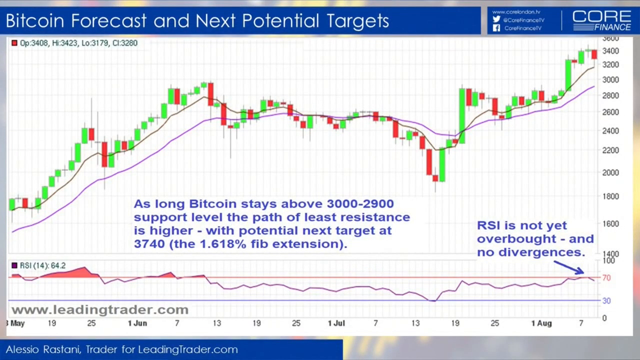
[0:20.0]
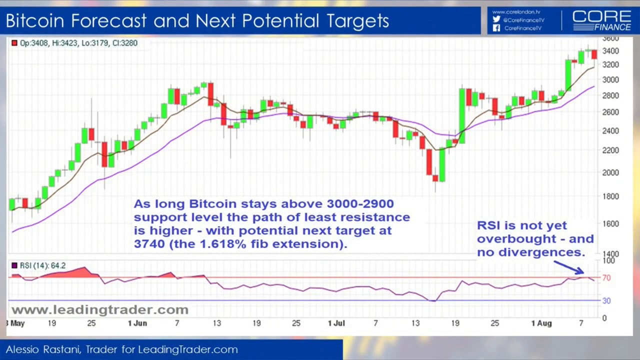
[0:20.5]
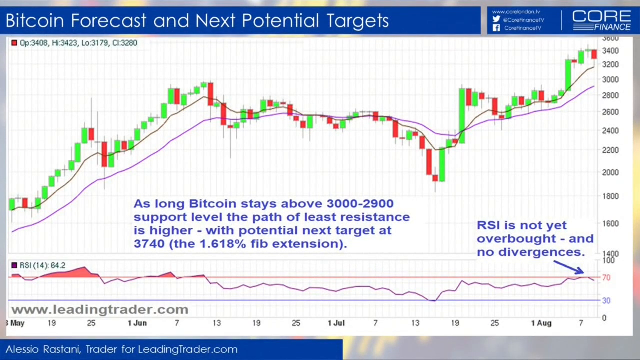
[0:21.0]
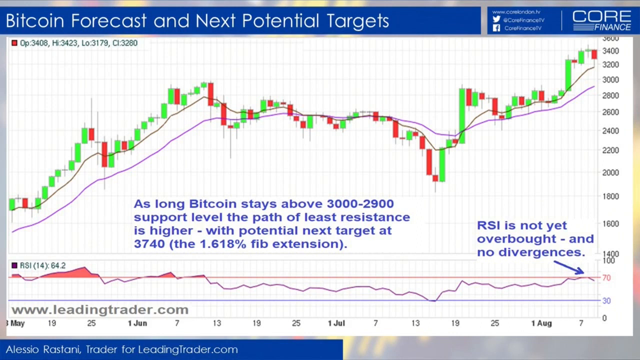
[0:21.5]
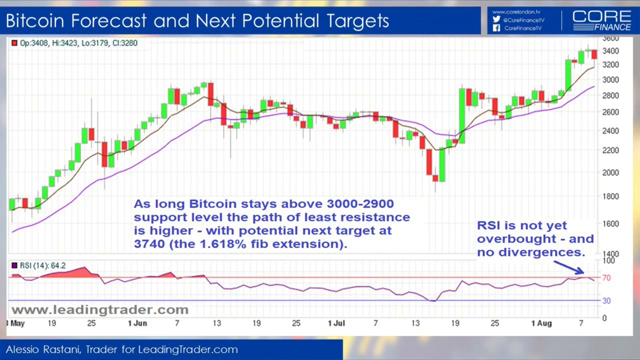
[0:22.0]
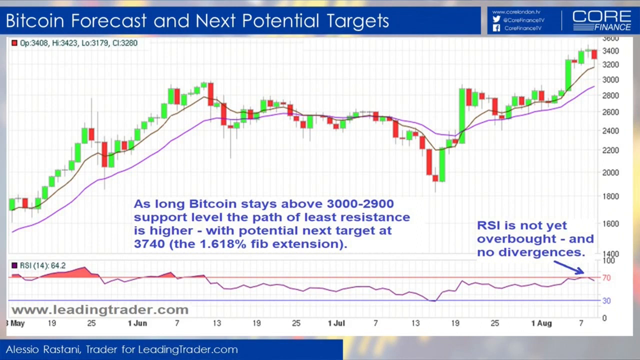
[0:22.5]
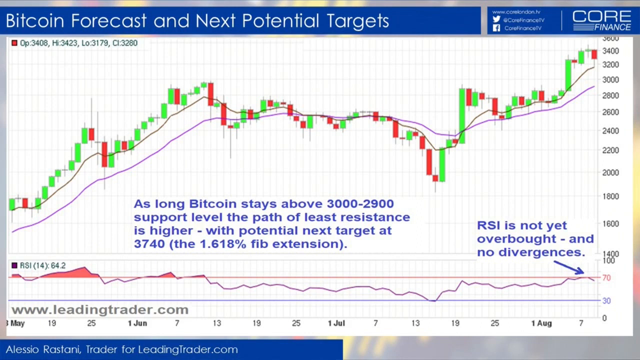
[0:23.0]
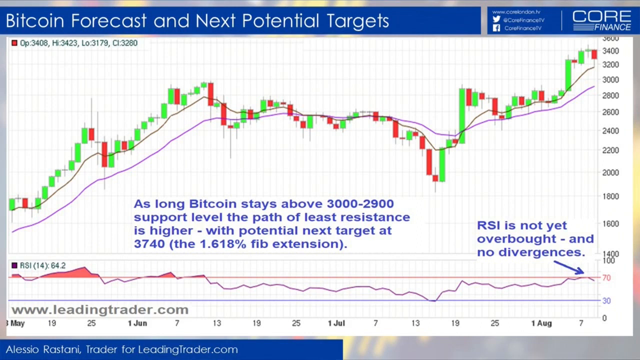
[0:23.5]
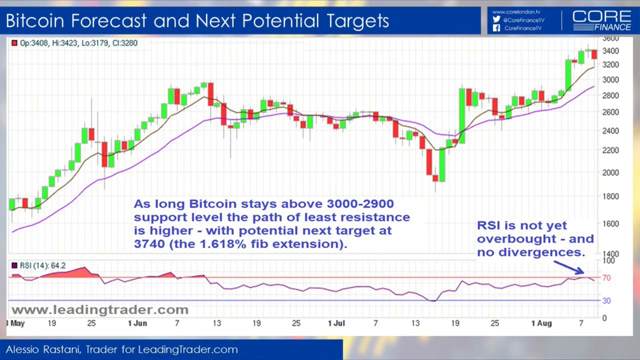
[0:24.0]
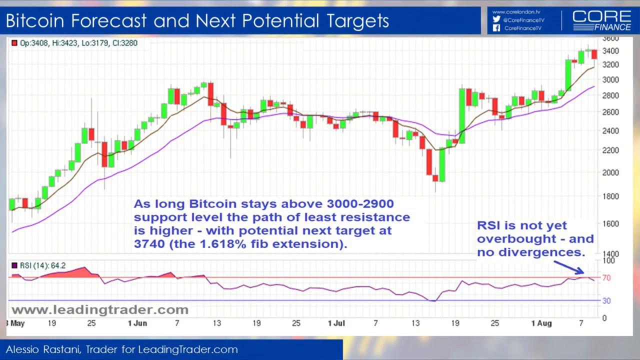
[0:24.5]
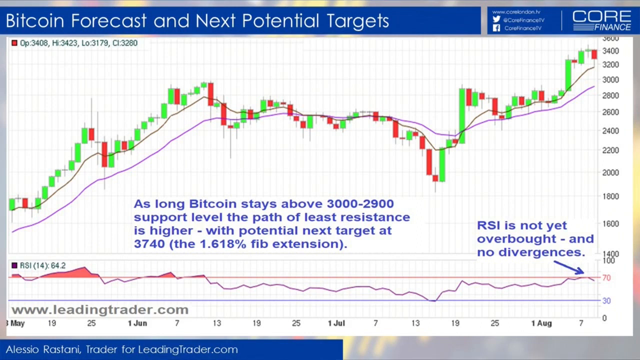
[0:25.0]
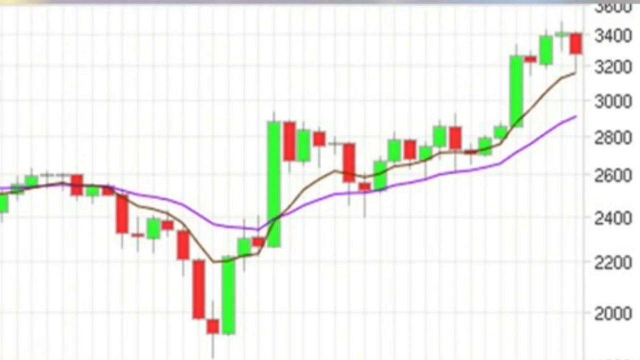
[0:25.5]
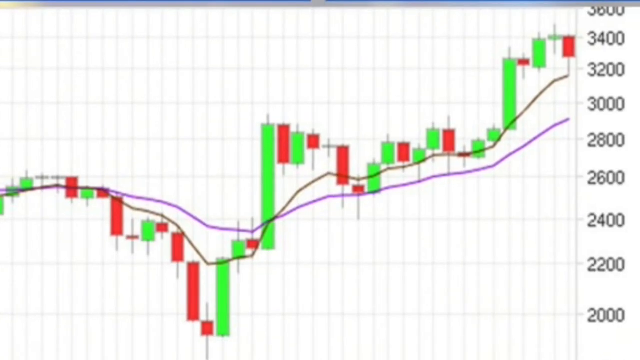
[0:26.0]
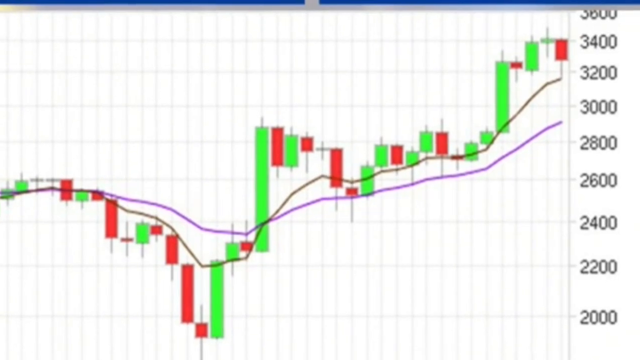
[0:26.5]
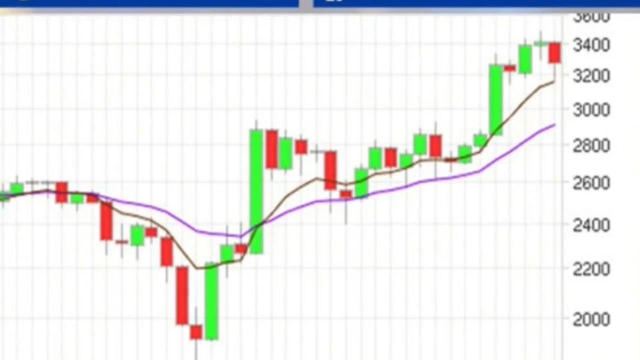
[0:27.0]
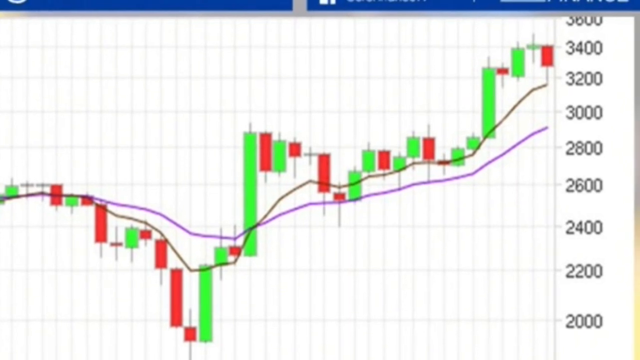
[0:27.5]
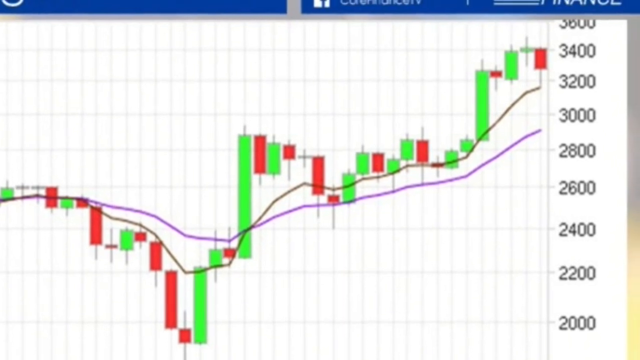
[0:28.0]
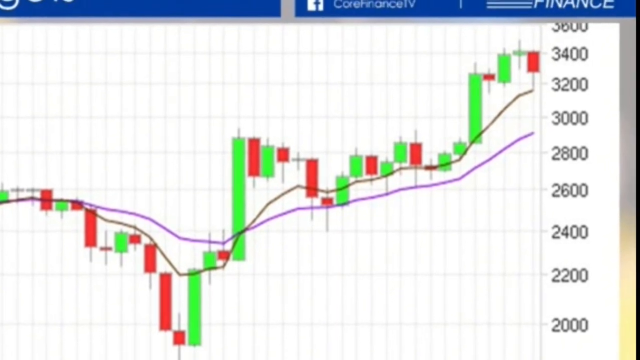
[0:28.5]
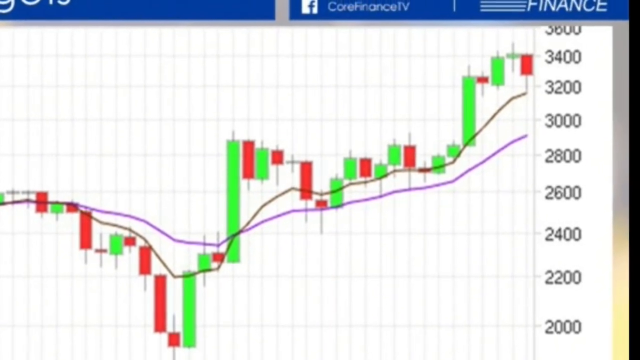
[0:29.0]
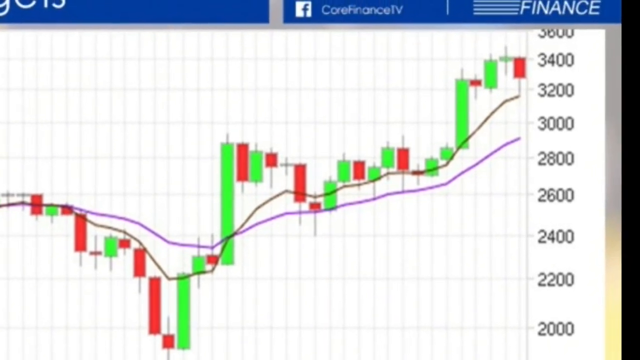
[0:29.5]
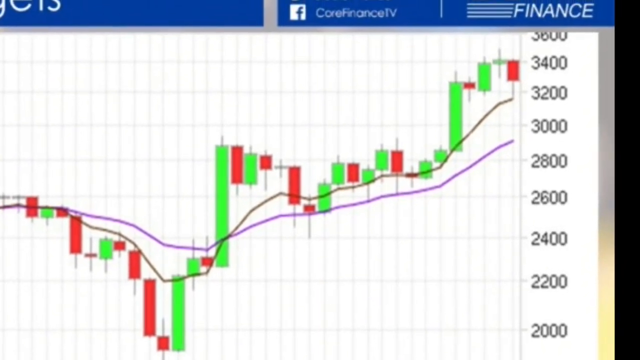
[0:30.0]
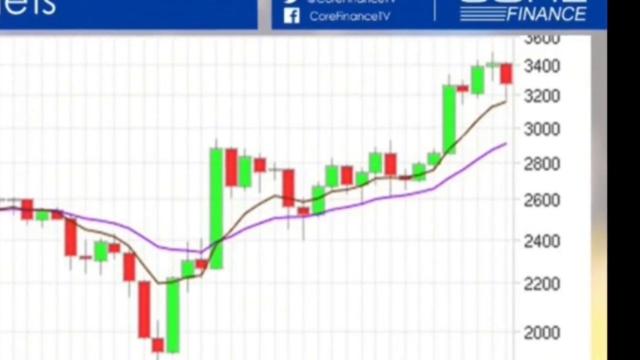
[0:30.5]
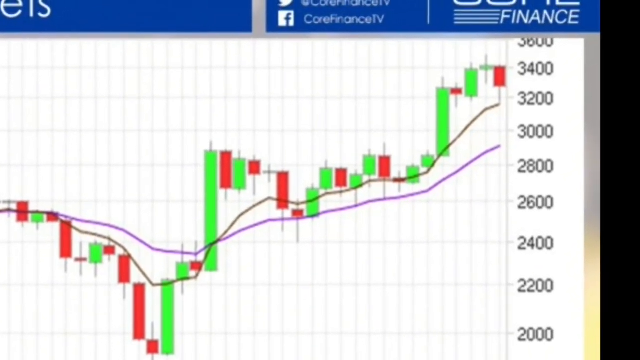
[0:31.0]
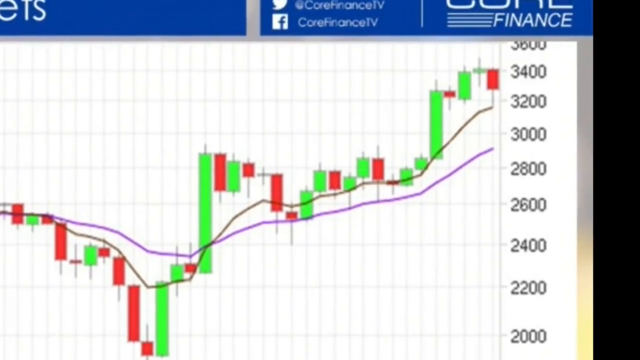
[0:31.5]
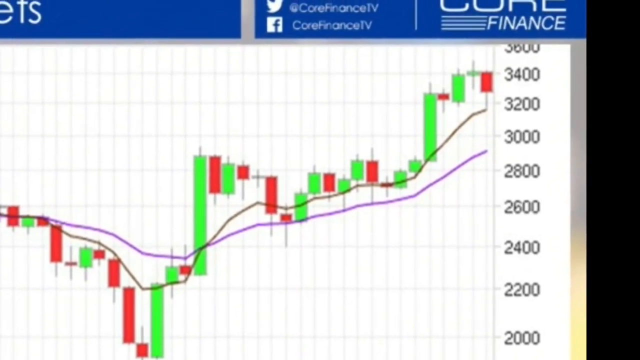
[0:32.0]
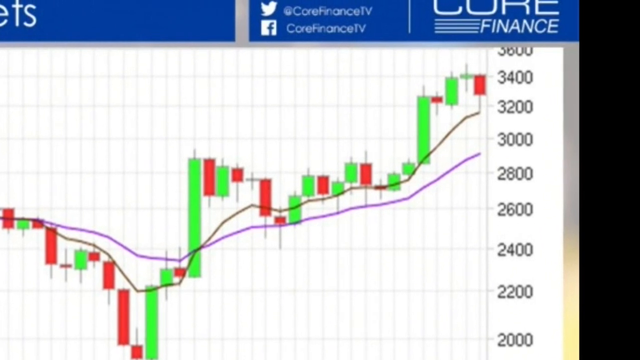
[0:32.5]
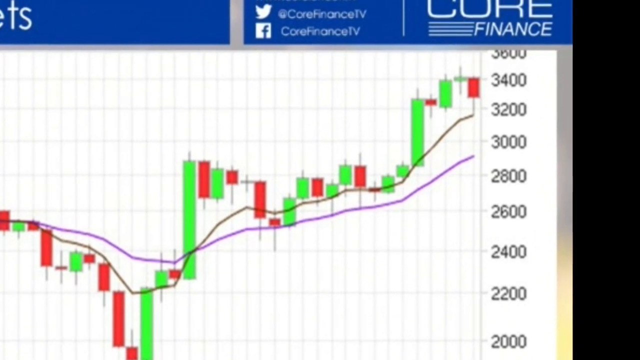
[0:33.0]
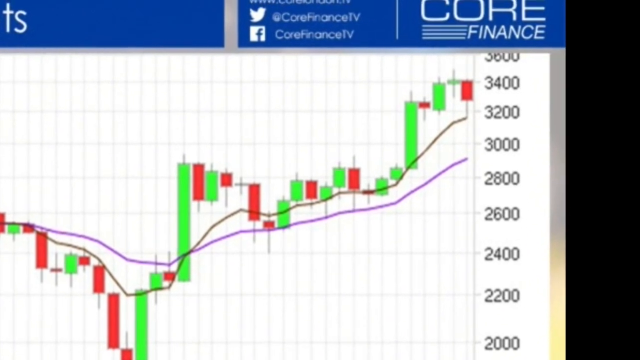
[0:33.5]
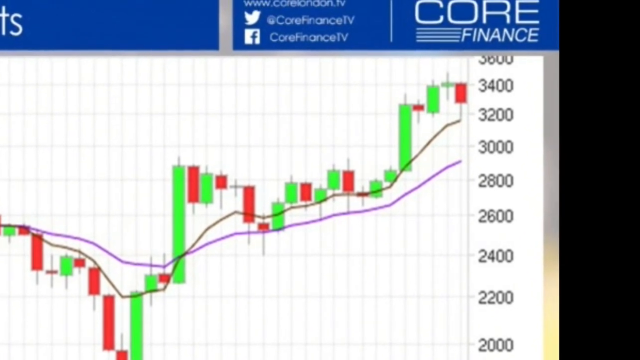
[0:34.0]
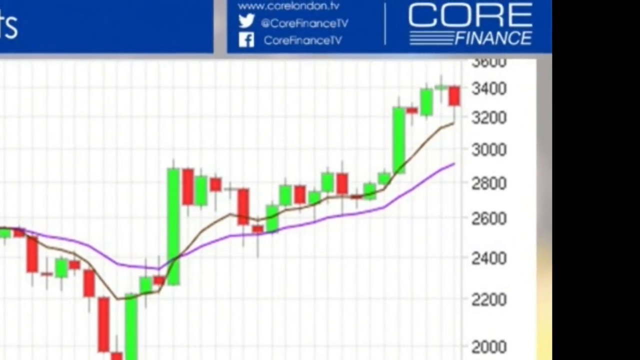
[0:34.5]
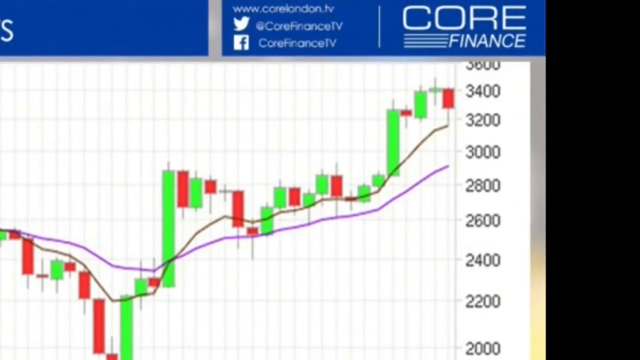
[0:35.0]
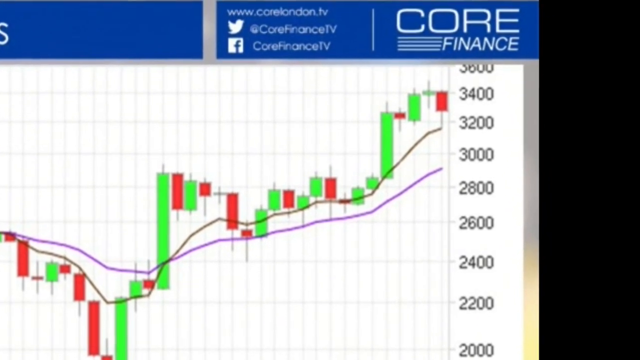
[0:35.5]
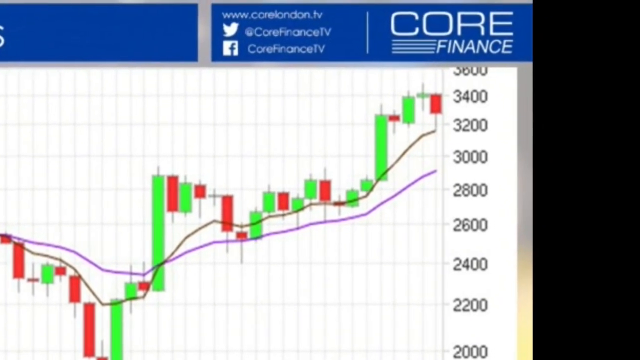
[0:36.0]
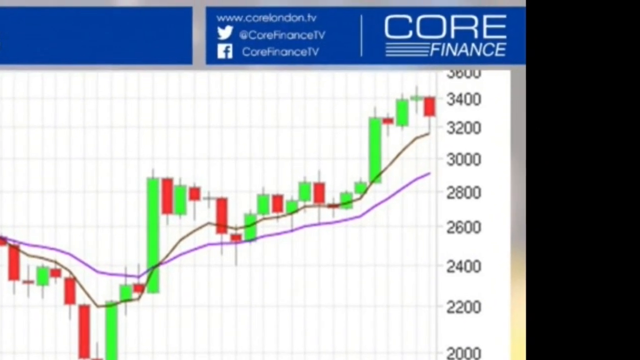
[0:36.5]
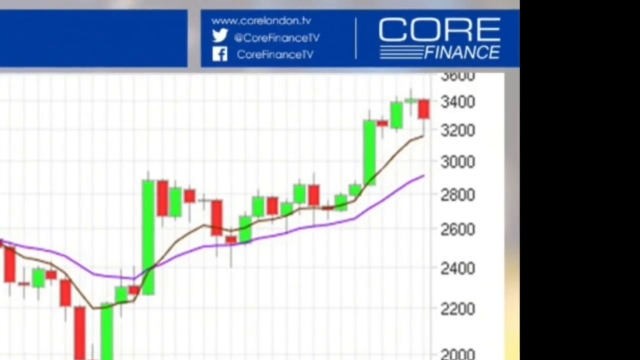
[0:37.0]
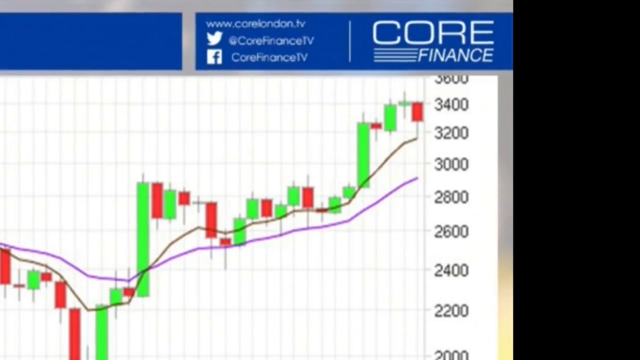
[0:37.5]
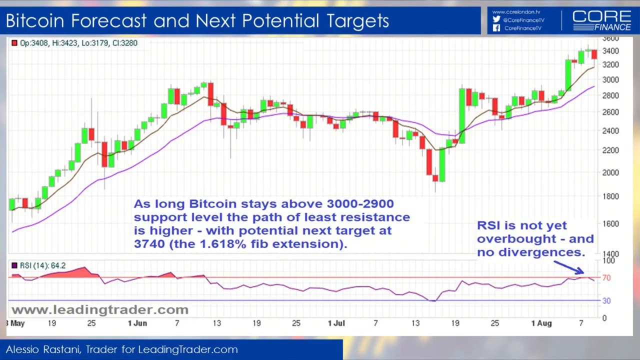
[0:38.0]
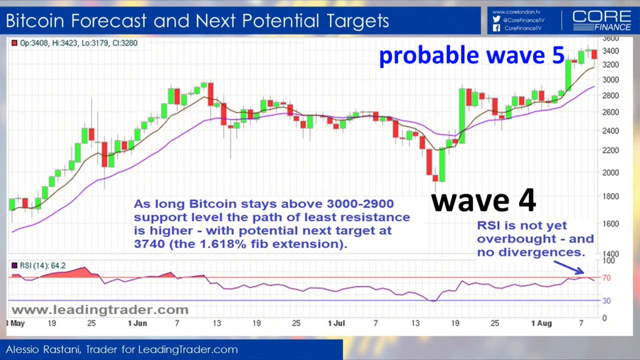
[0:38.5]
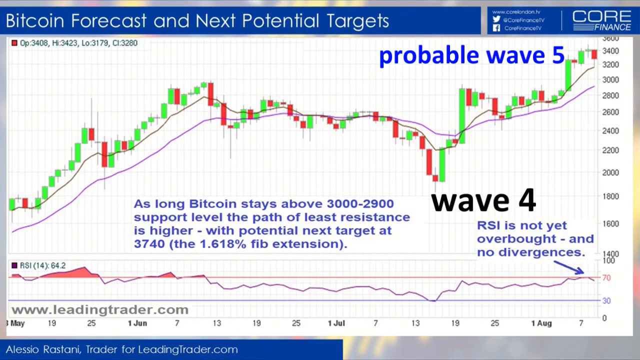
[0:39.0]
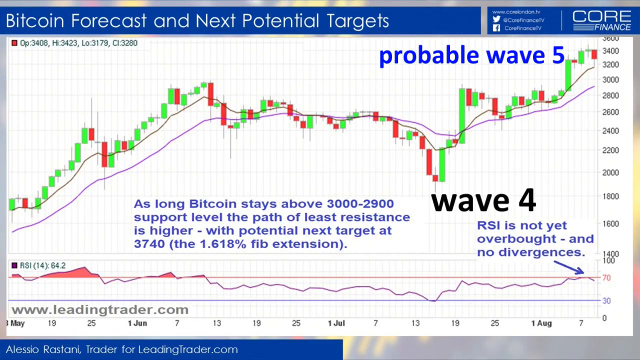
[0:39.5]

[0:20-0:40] The other person wears a black suit, and the two are probably talking about the market trend. A close-up of the market chart shows "bitcoin forecast and next potential targets" at the top left. The highs of the bitcoin are 3423, the lows are 3179 and the current price is 3280. The bitcoin trend line is shown in candlesticks, with line graphs following the candles. Text in the main chart reads "as long bitcoin stays above 3000 to 2900 support level the path of least resistance is higher with potential next target at 3740 the 1.618% fib extension". At the bottom right the text reads "rsi is not yet overbought". The RSI is a line graph shown at the bottom. The candlesticks are green and red, and two line graphs go with the trend. A close-up of the market trend shows the current price at 3400.